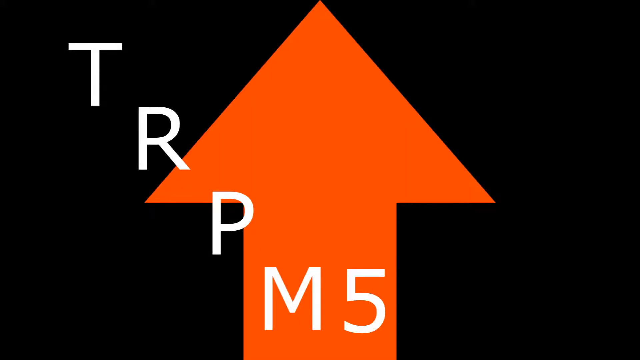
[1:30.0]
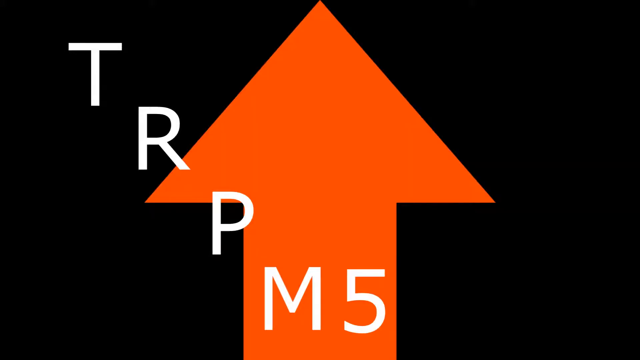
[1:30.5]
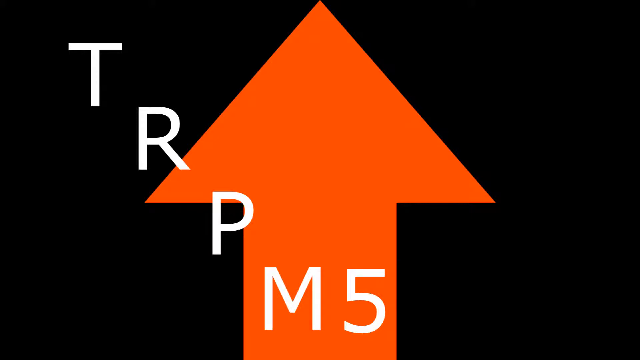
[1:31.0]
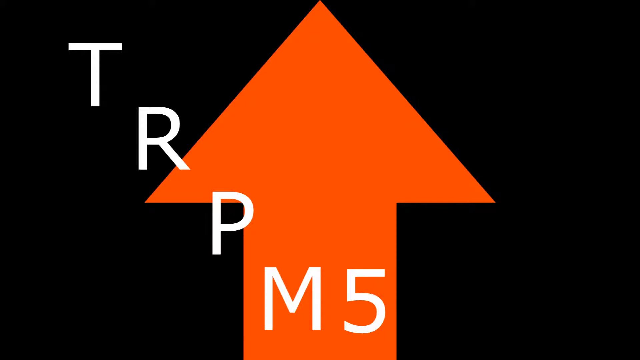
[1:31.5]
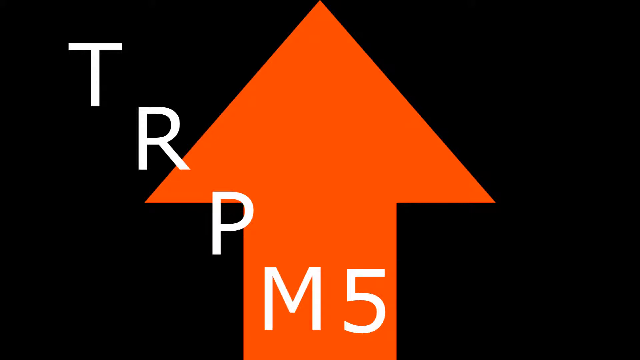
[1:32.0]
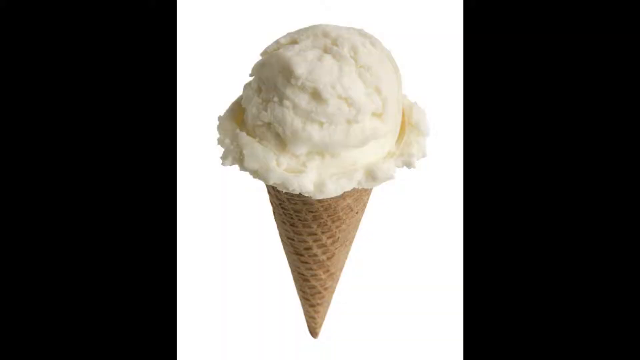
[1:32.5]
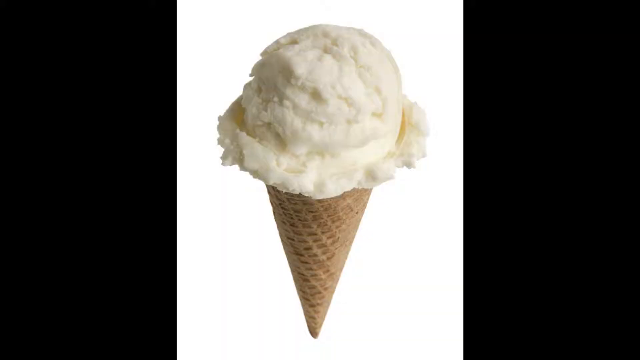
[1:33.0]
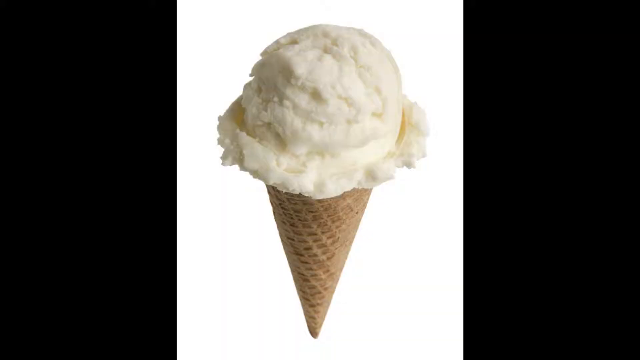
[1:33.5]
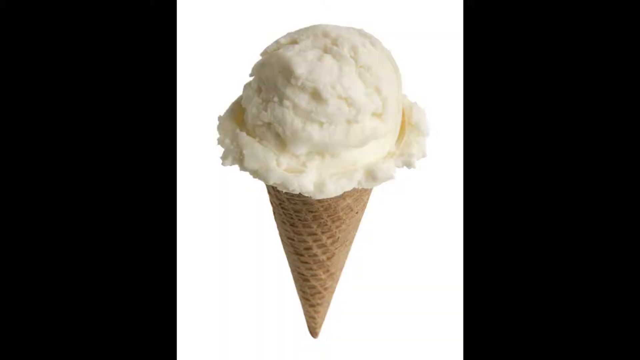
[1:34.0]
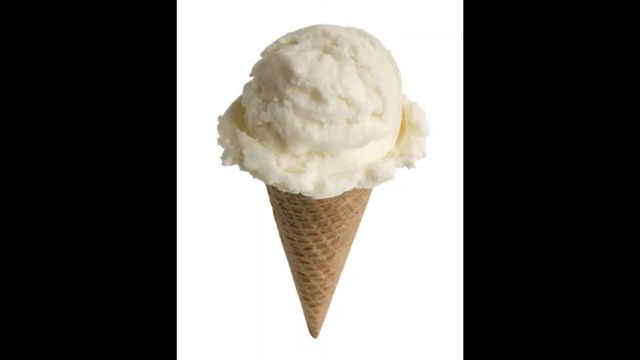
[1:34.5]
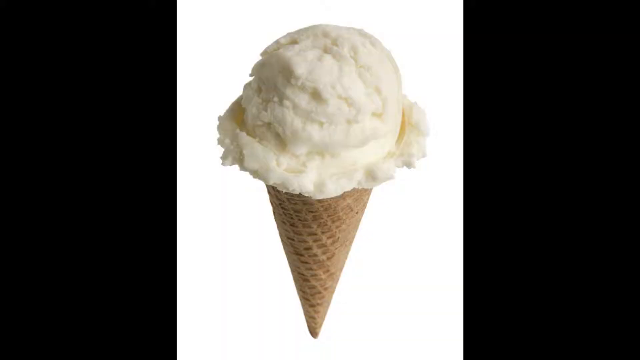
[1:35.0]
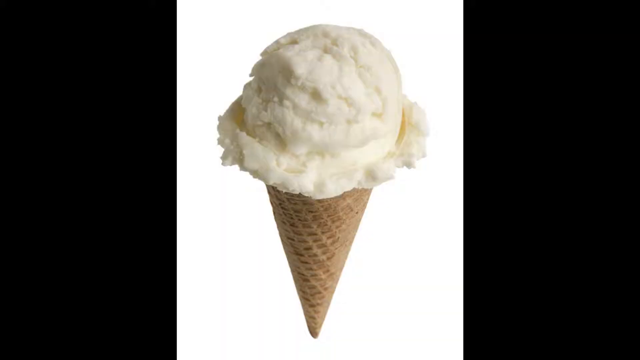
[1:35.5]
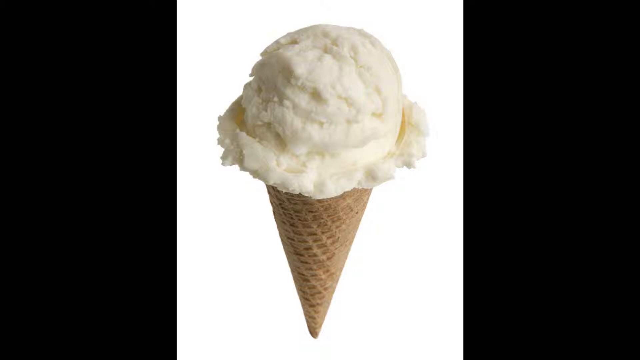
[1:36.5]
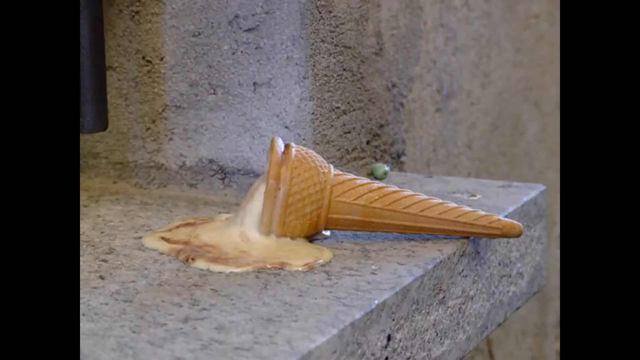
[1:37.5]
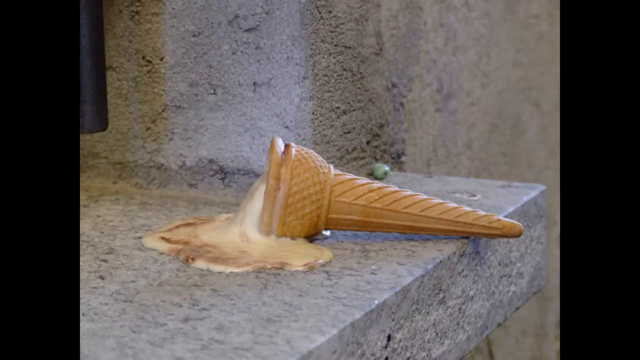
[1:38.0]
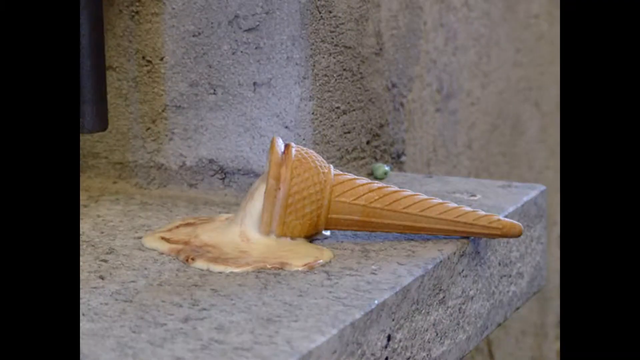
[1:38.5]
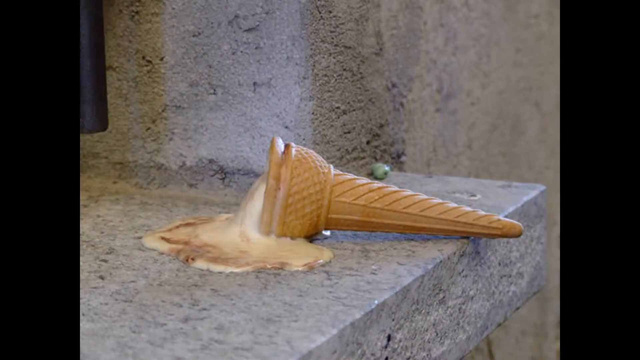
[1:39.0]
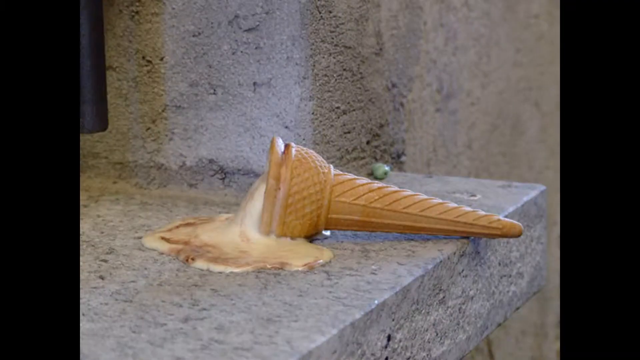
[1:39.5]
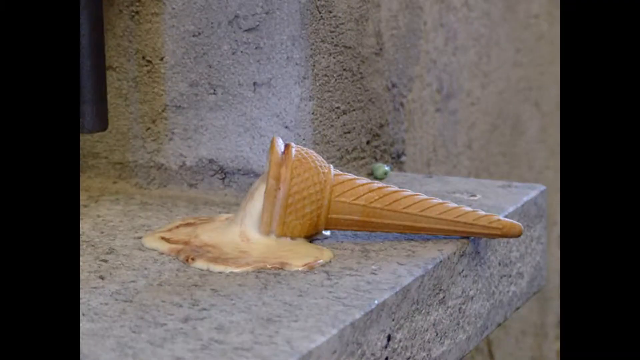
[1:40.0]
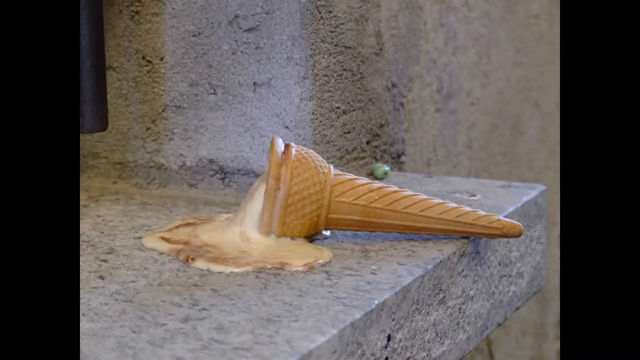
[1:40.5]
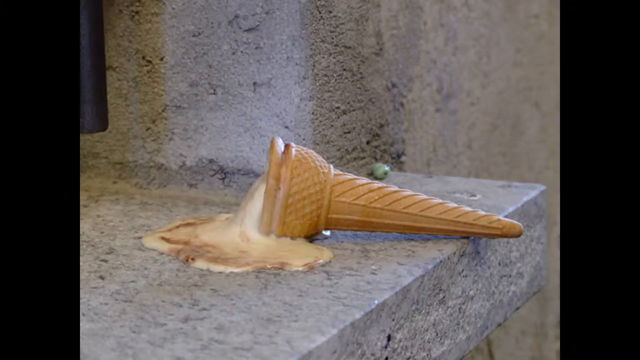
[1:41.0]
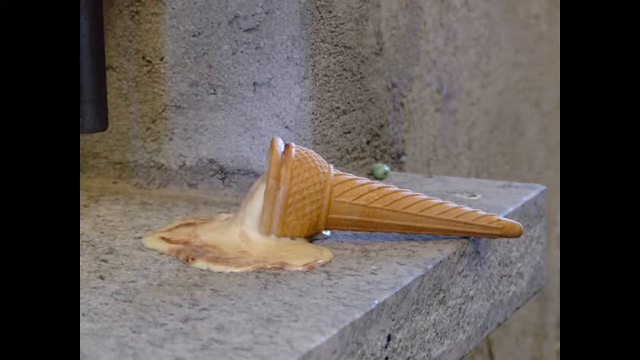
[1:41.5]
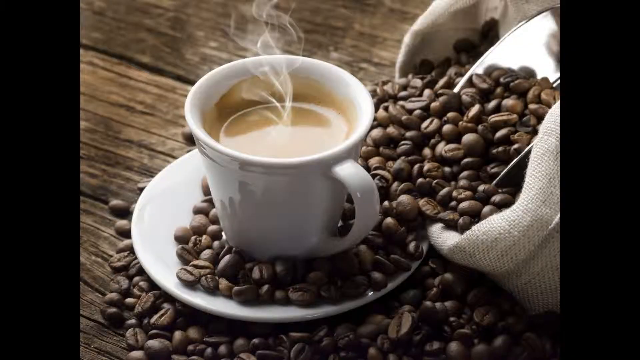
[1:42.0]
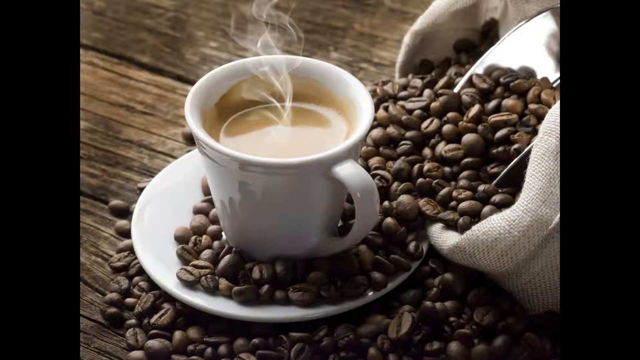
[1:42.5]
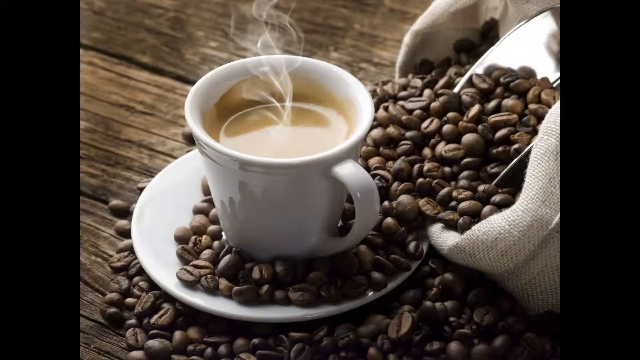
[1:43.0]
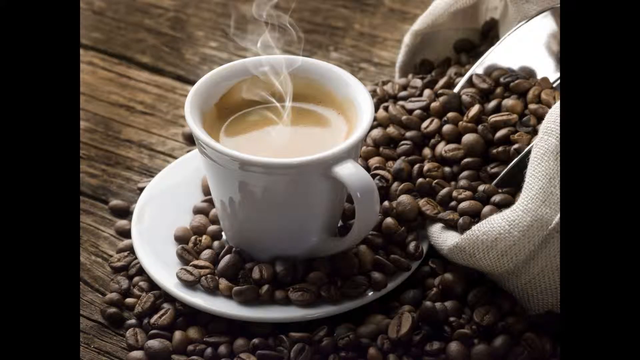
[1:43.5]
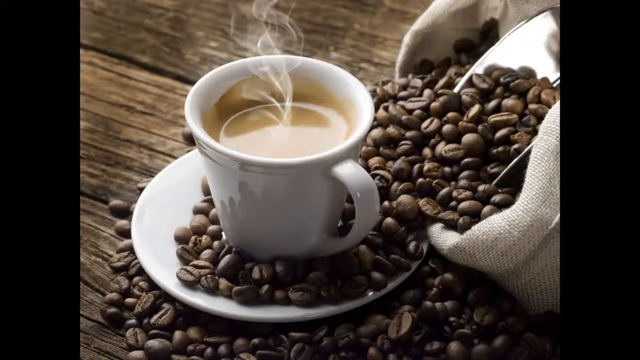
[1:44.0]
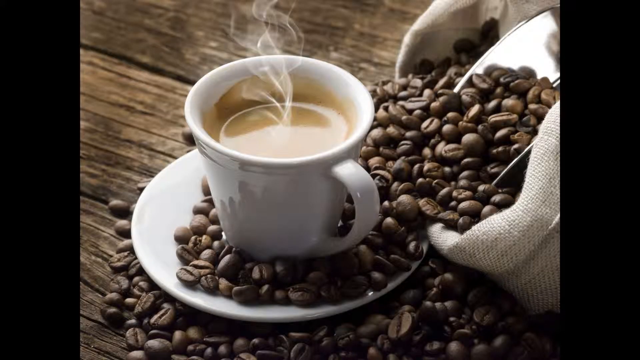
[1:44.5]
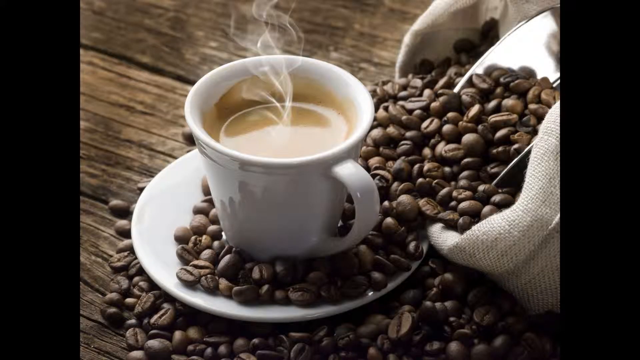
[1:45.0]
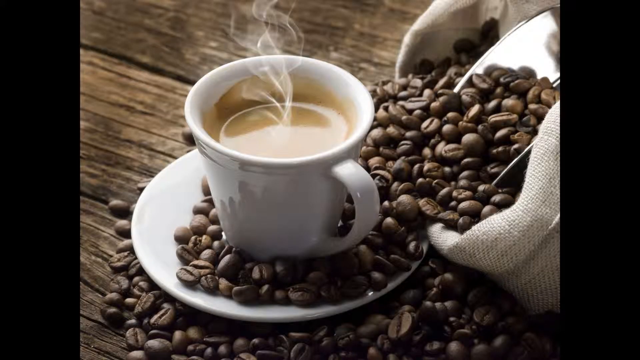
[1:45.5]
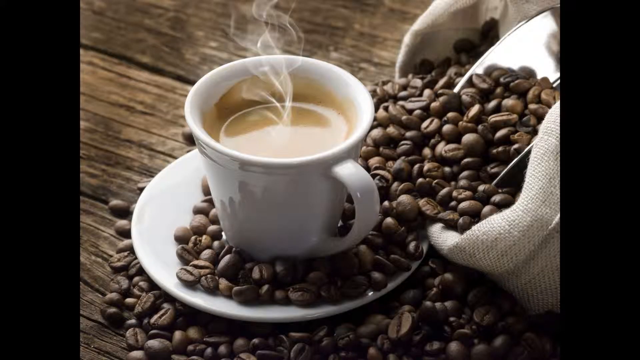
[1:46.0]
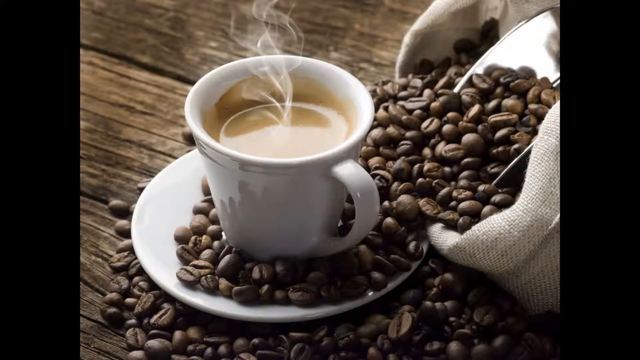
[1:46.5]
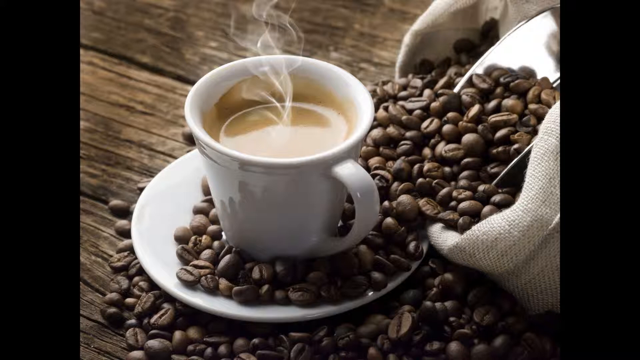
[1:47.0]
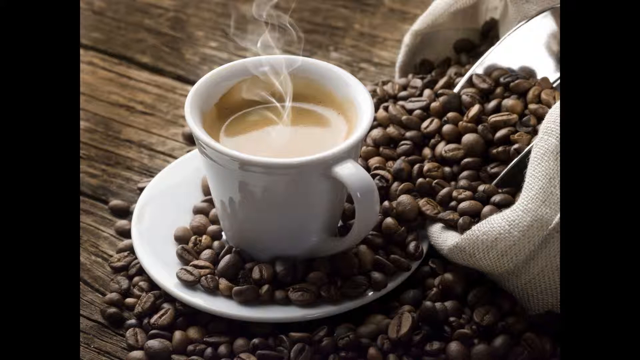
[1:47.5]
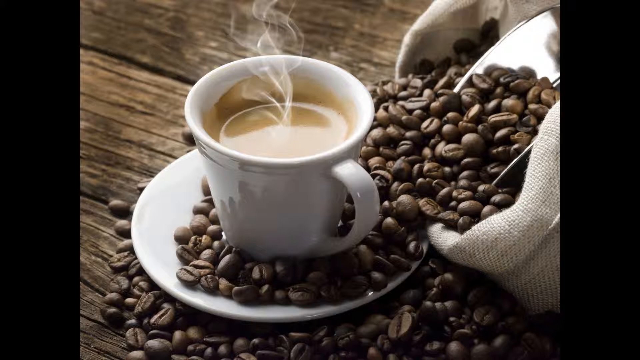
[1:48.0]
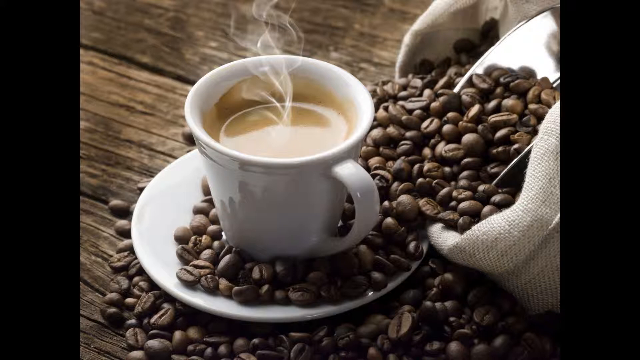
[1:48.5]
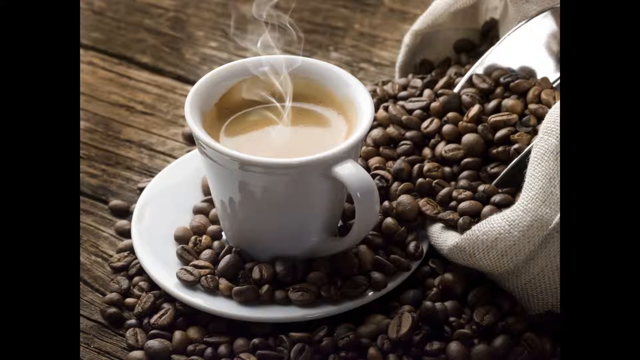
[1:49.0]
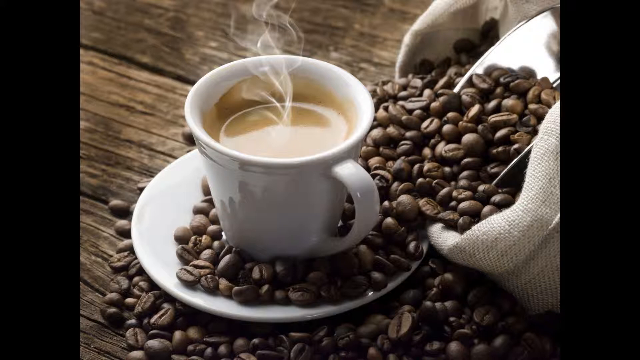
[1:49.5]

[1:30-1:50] The caption "TRPM5" with a red arrow pointing upward is on screen. An ice cream cone appears, then a melted ice cream cone, then hot coffee on a saucer with a lot of coffee beans surrounding it. The video then goes back to "TRPM5".